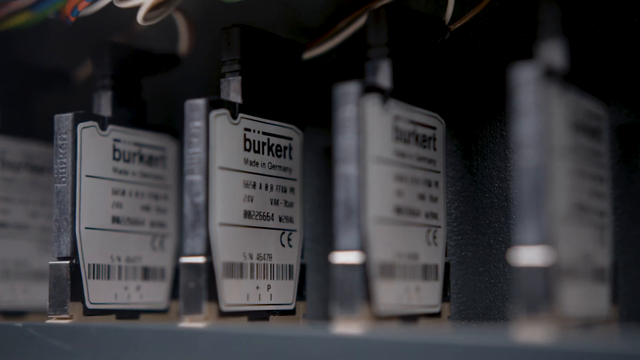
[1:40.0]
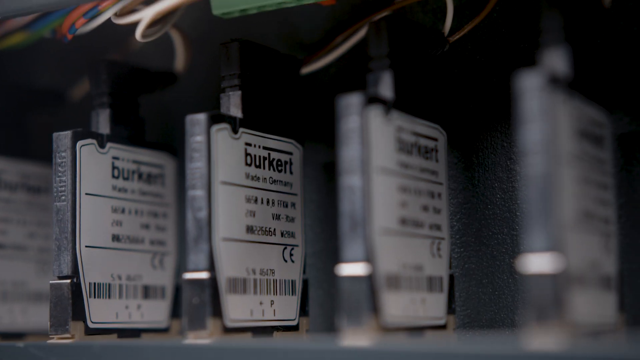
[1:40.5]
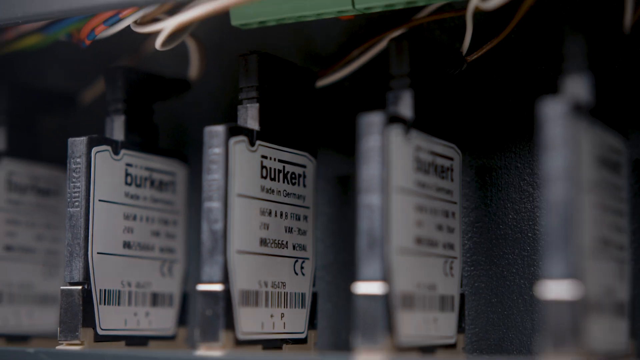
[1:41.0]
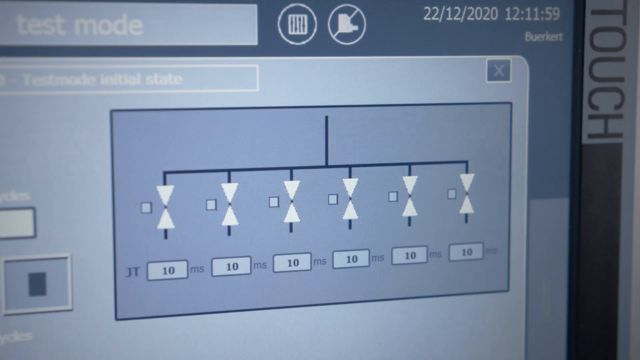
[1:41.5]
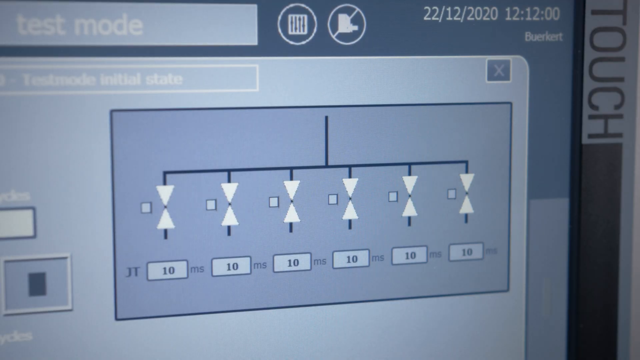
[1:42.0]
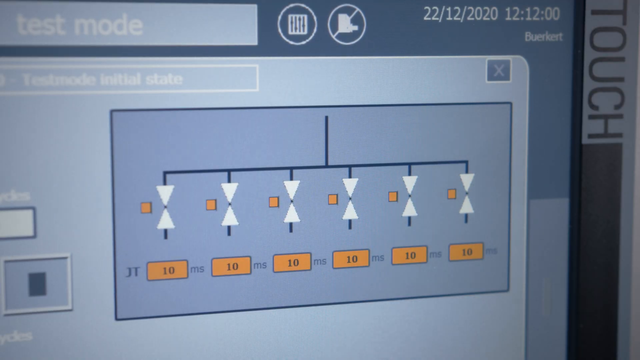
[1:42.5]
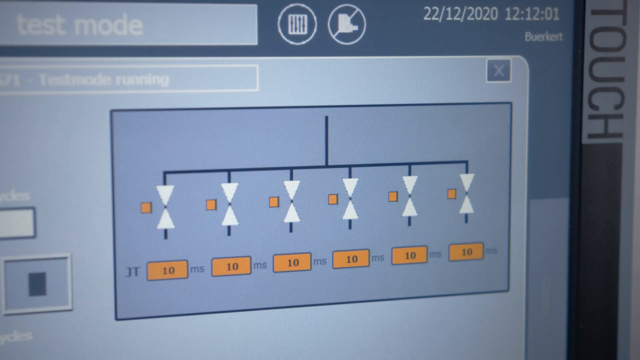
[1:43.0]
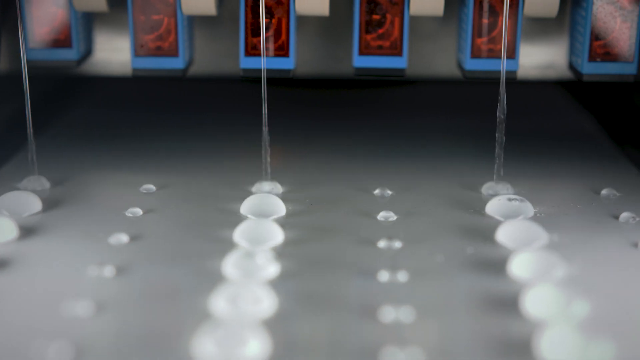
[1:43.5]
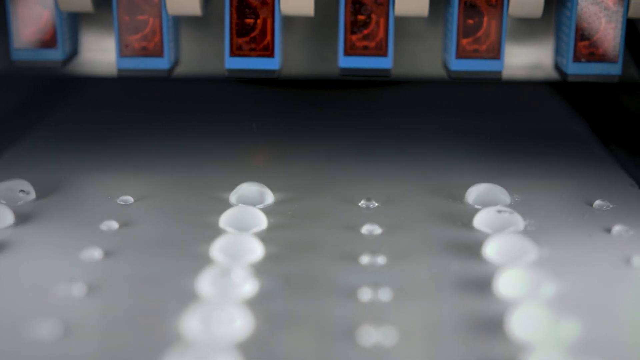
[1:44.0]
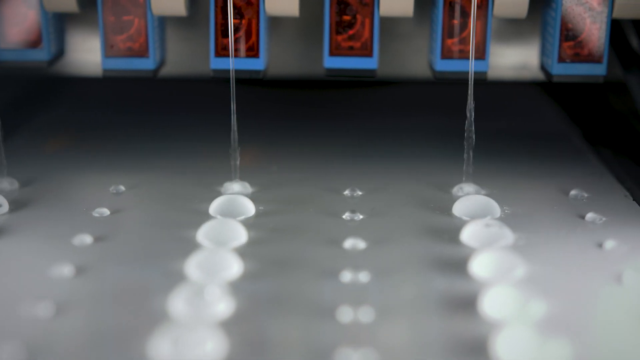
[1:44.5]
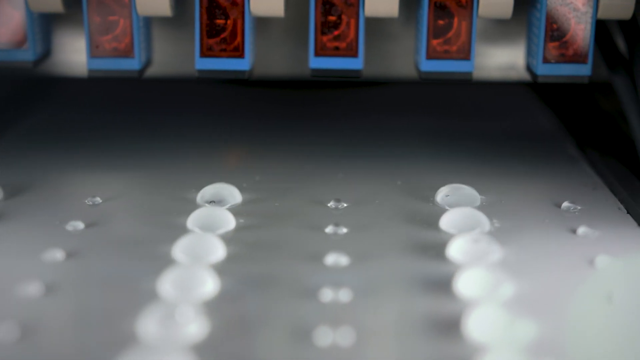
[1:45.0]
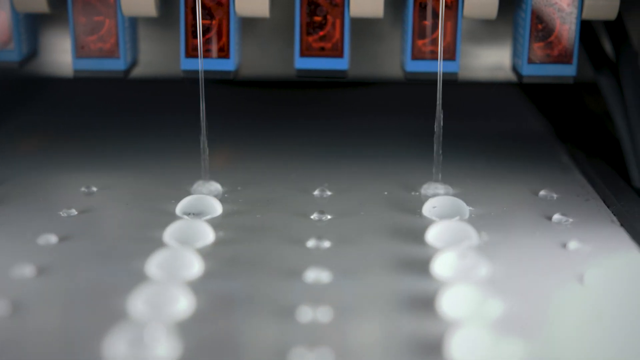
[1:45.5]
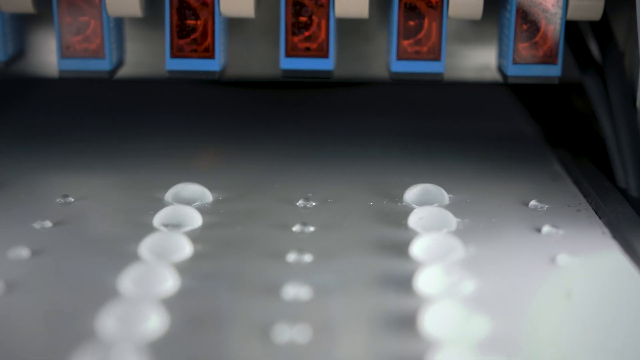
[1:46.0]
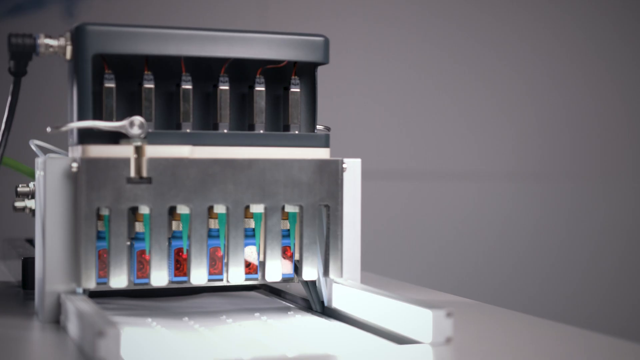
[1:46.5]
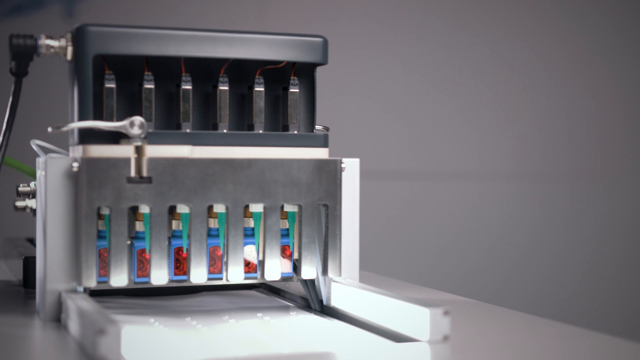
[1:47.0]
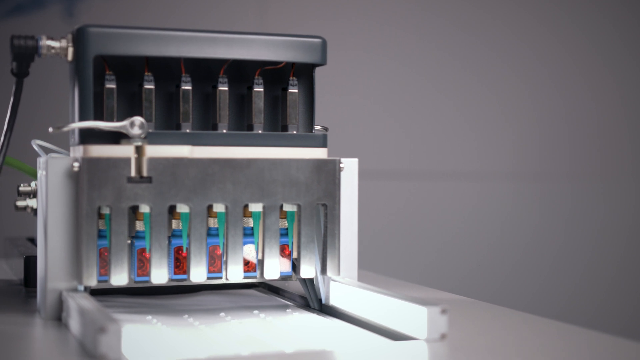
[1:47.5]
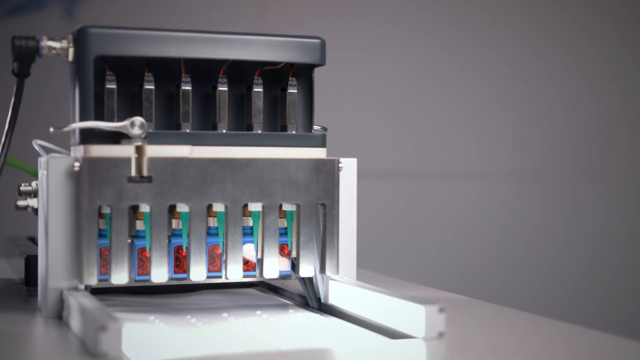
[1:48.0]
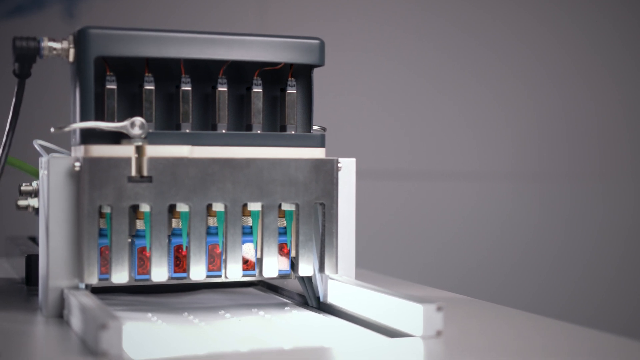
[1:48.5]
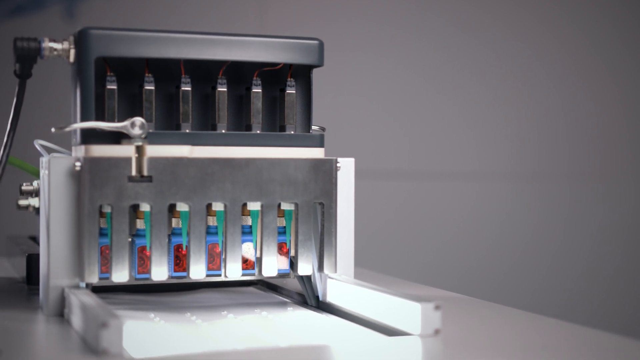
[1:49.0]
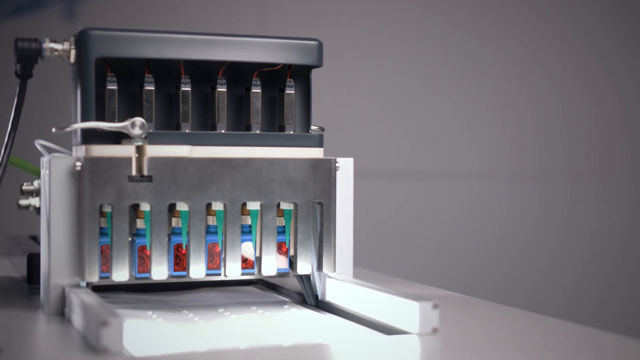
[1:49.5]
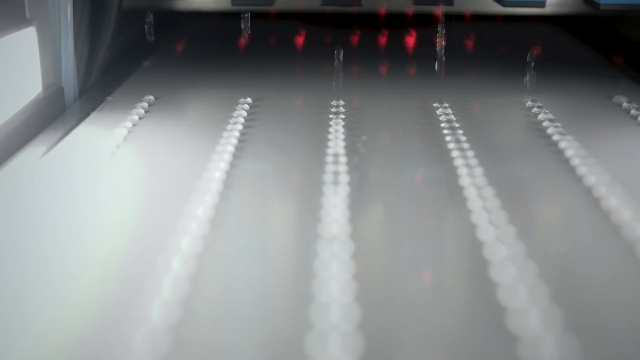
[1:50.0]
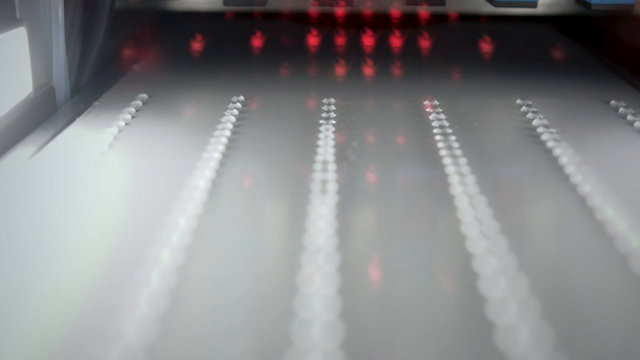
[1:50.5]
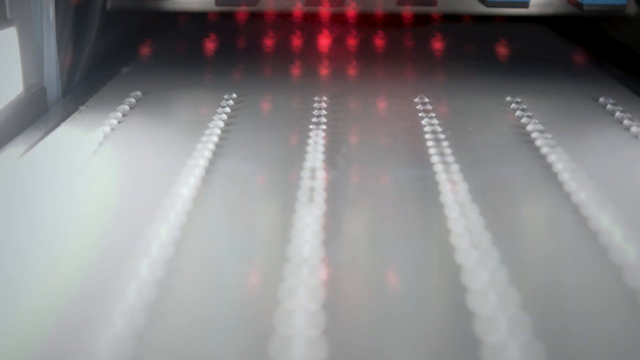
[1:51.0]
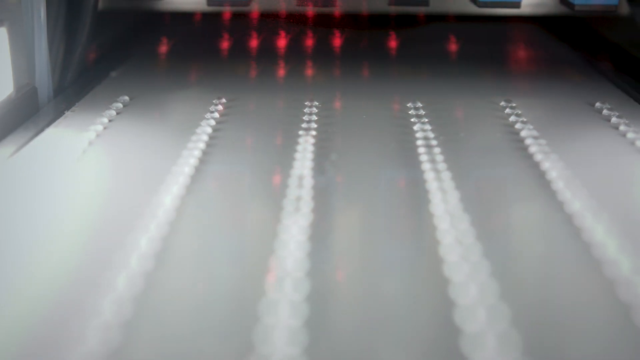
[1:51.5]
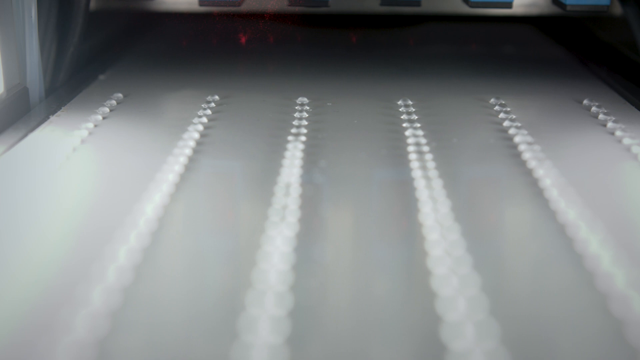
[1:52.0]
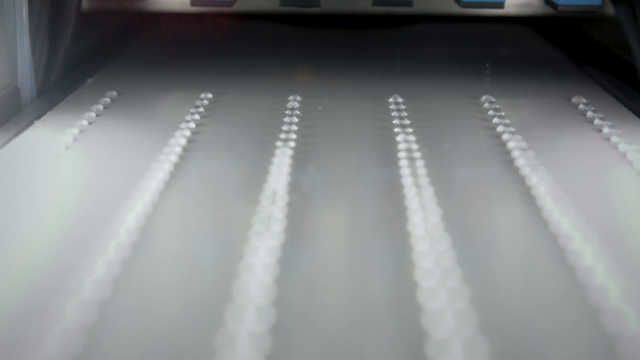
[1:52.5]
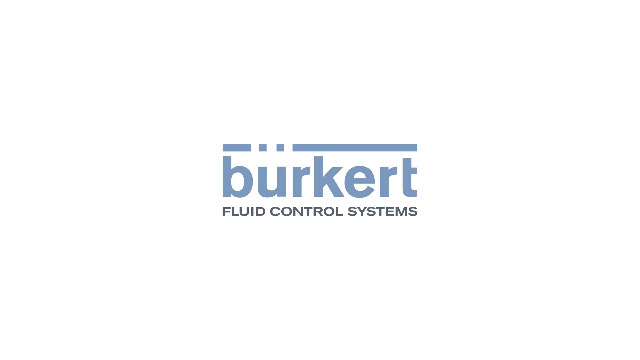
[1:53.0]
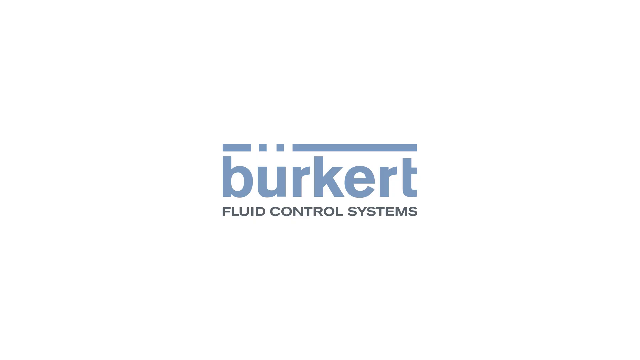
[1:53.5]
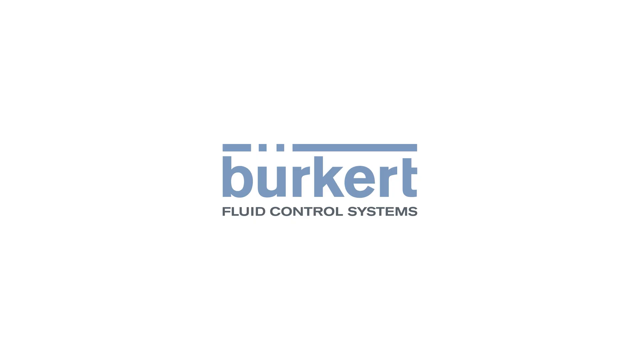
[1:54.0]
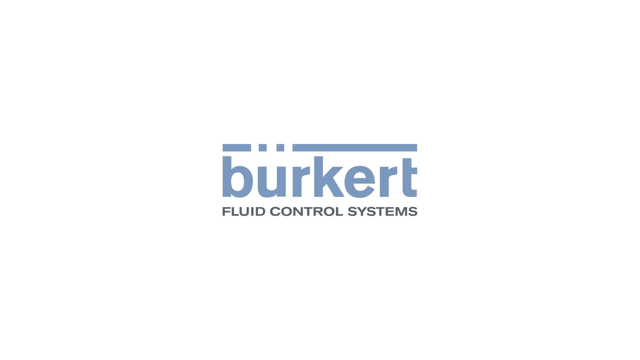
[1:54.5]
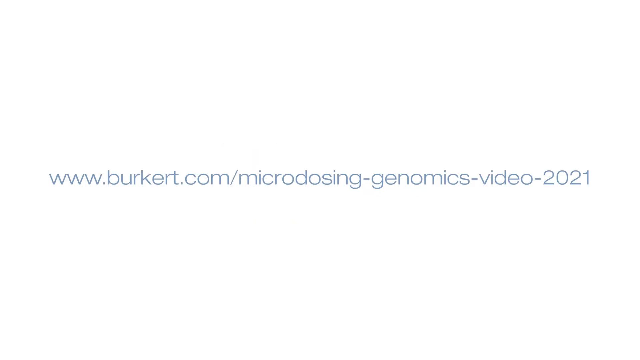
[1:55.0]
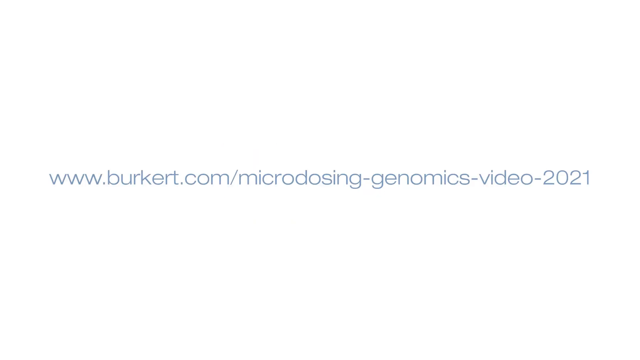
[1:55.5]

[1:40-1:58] A machine with lots of little components is on display; the brand name is Burkert, and it is made in Germany. Little cartridges are on the back of the machine, each with something like an ISBN number so each one can be scanned, and wires in white, red and blue come out of each section. The machine is then in action, putting out fluid drops that look circular and a little bit dome-shaped, almost in a pattern from the left: a row of big circles, then very tiny ones, then big, then tiny, then big, then tiny. The look of the machine is then shown with red lights shining in the background, and the text reads "Burkert fluid control systems." At the very end a website appears: "www.burkert.com/microdosing-genomics-video-2021."